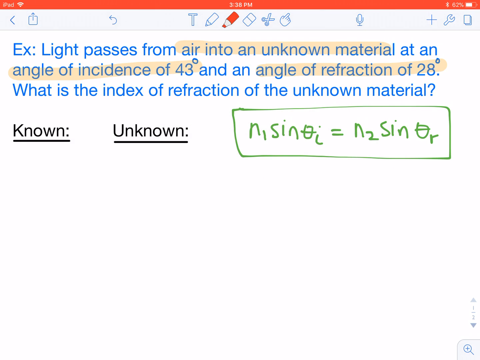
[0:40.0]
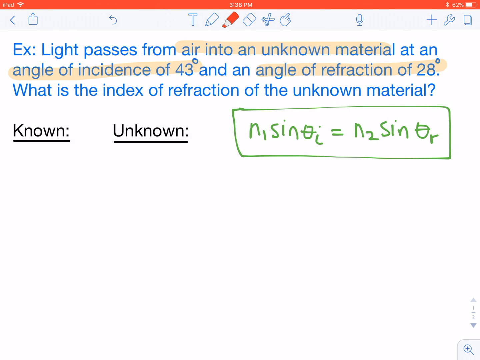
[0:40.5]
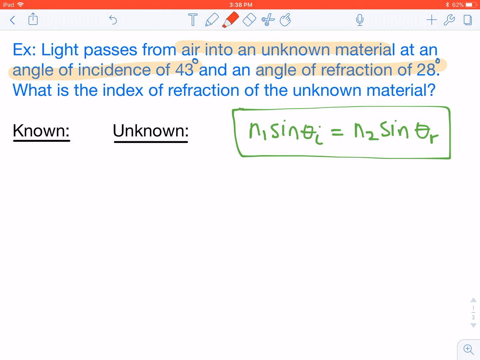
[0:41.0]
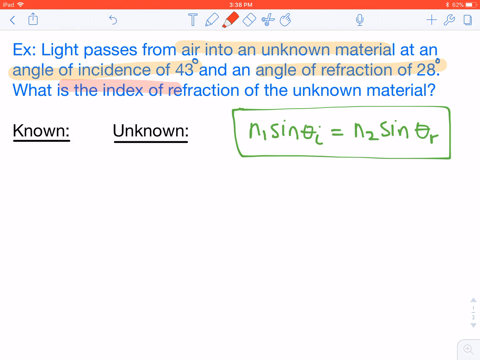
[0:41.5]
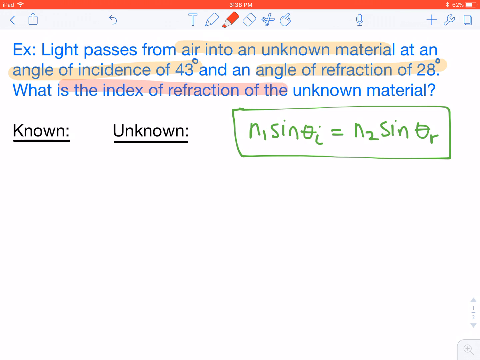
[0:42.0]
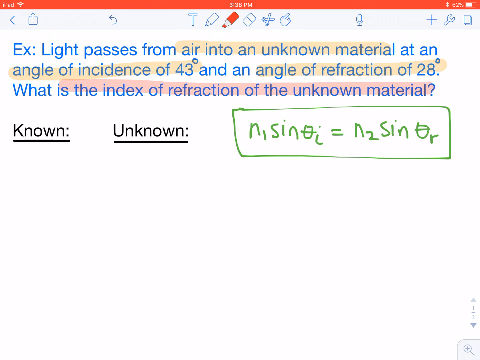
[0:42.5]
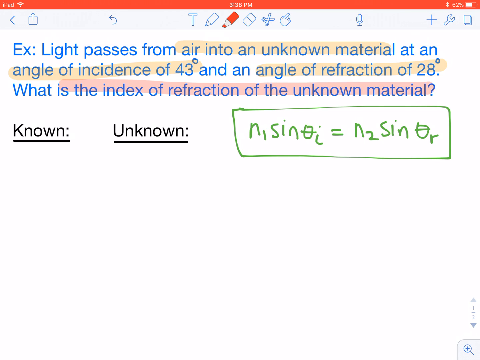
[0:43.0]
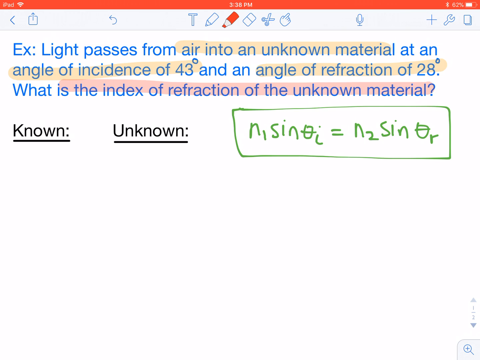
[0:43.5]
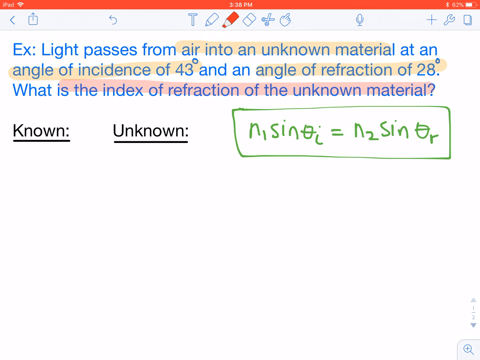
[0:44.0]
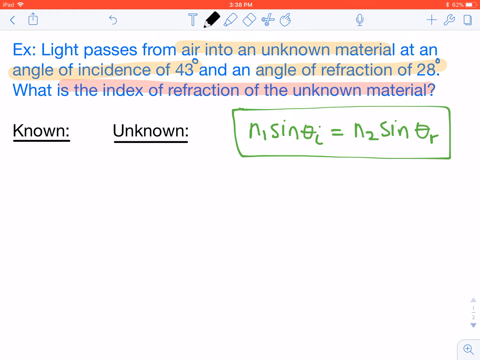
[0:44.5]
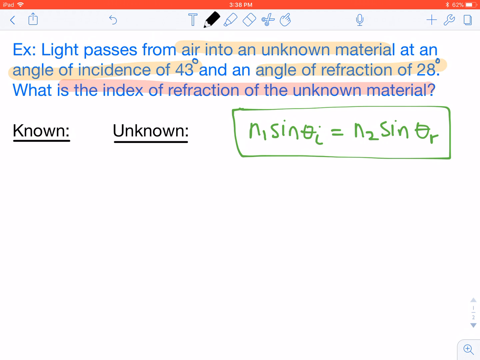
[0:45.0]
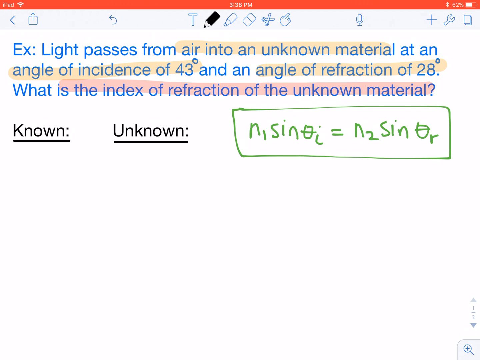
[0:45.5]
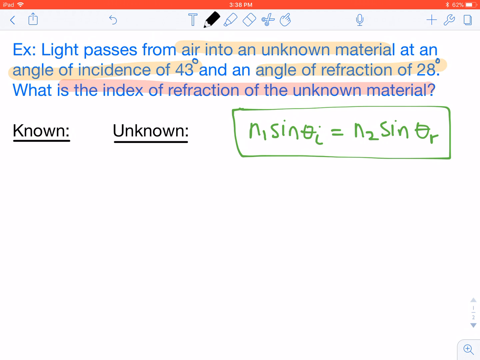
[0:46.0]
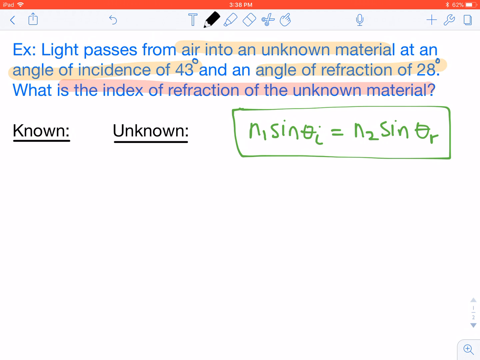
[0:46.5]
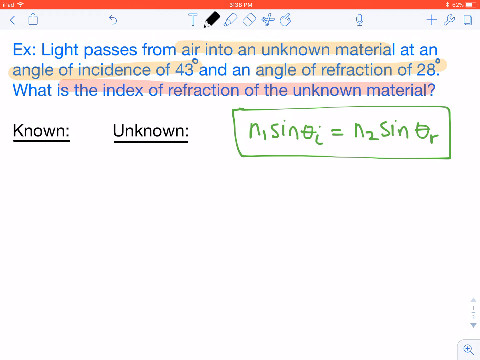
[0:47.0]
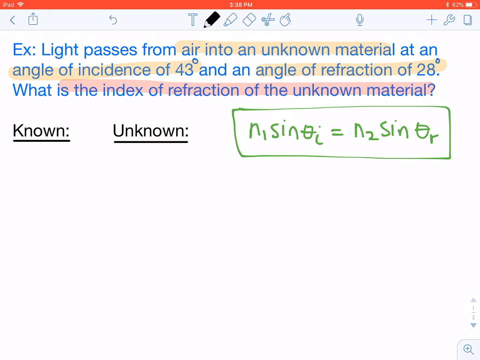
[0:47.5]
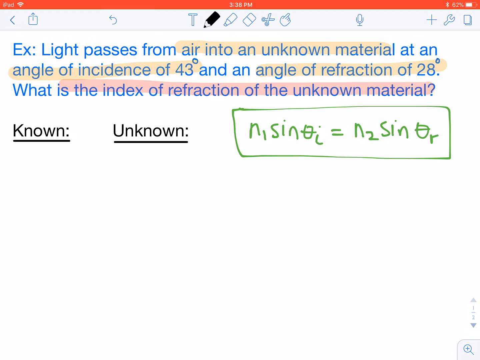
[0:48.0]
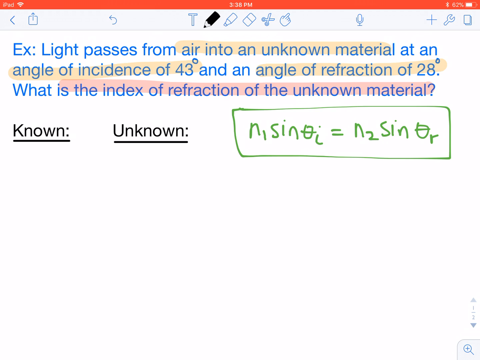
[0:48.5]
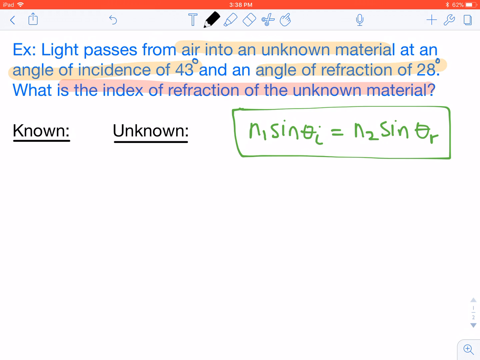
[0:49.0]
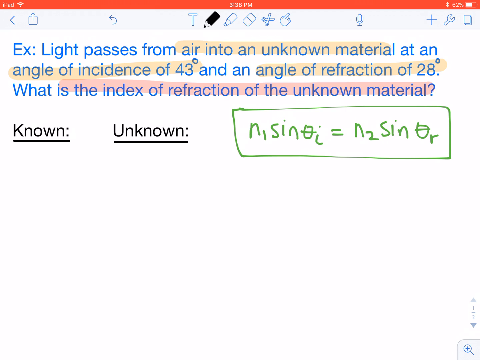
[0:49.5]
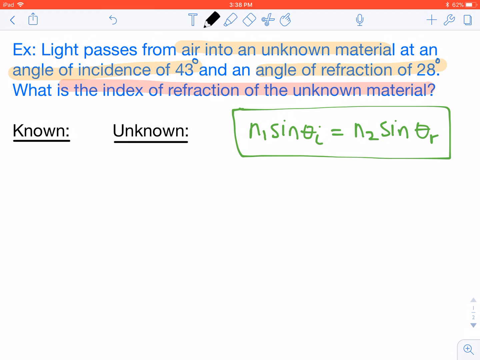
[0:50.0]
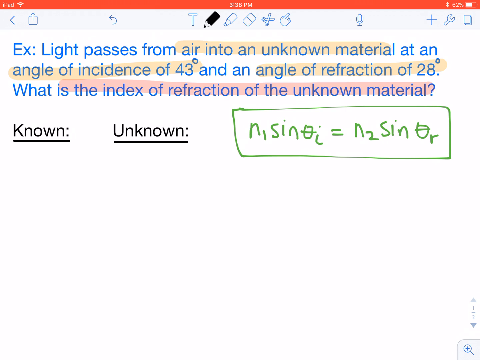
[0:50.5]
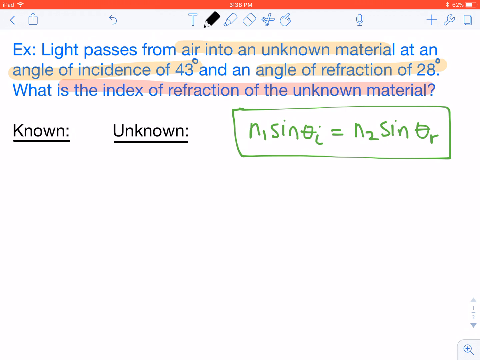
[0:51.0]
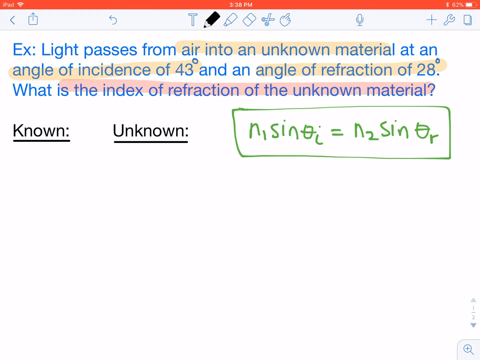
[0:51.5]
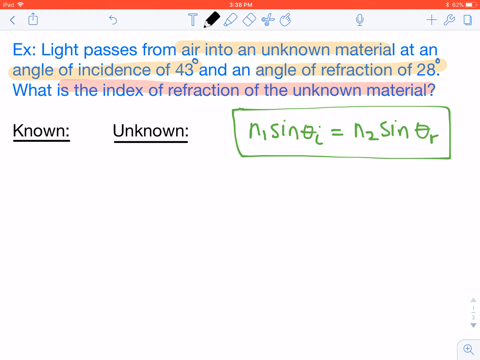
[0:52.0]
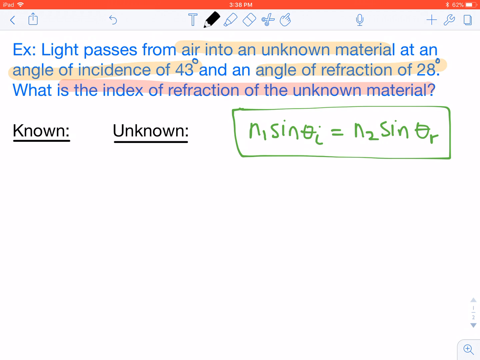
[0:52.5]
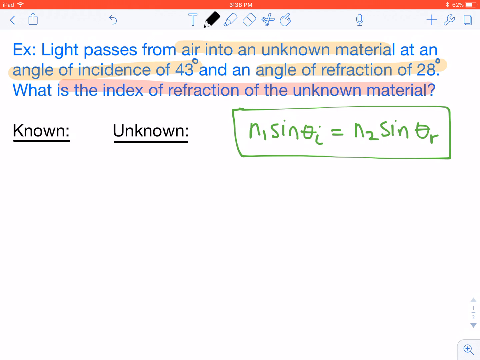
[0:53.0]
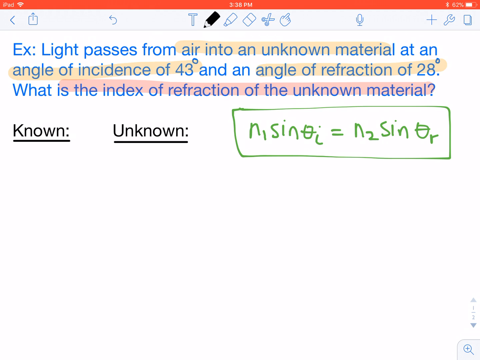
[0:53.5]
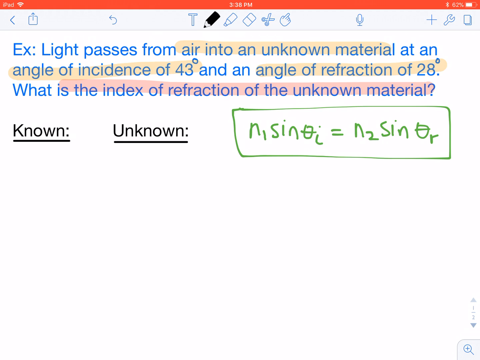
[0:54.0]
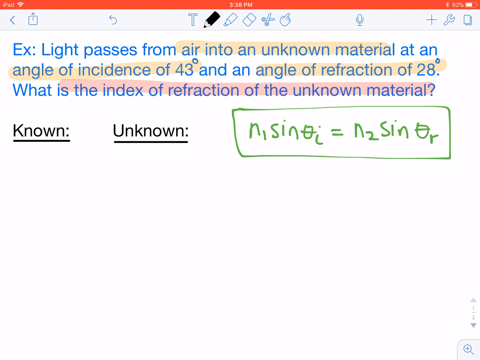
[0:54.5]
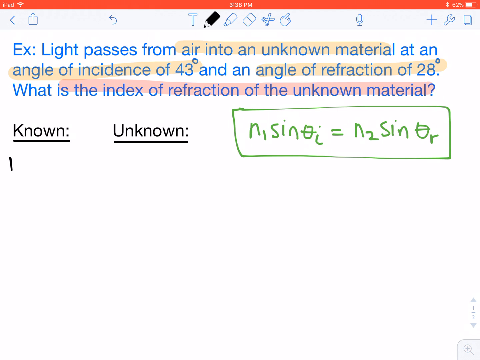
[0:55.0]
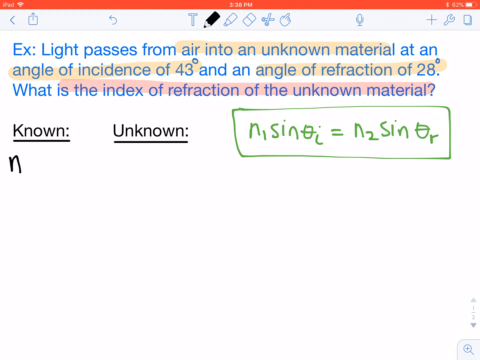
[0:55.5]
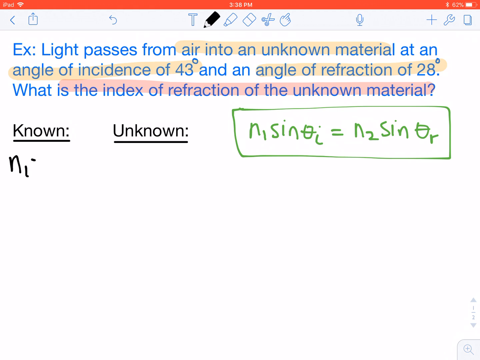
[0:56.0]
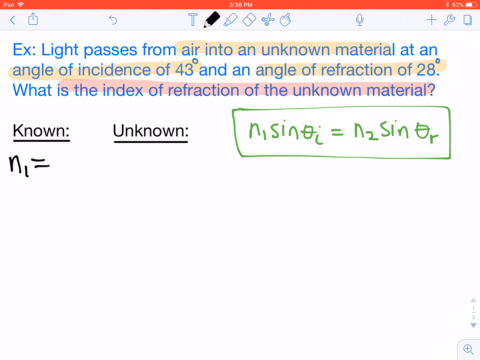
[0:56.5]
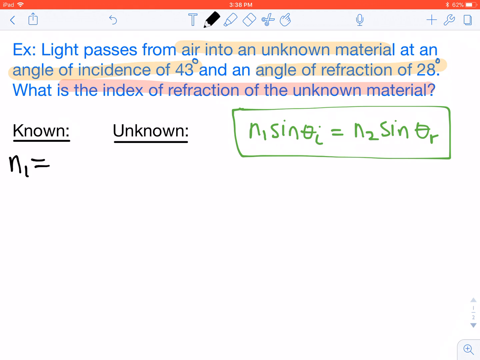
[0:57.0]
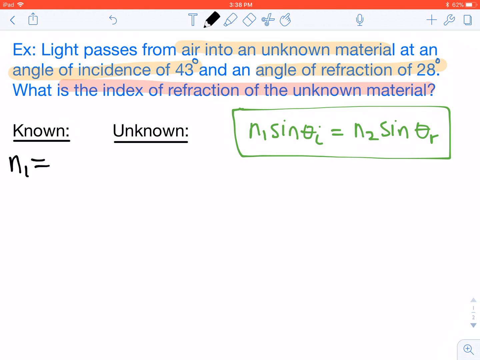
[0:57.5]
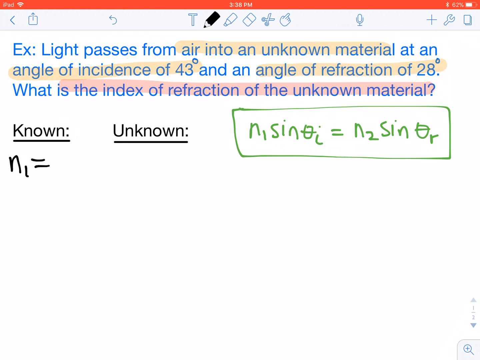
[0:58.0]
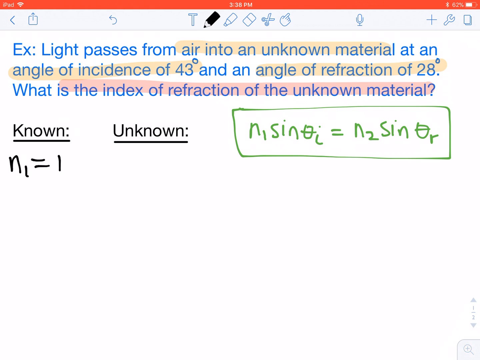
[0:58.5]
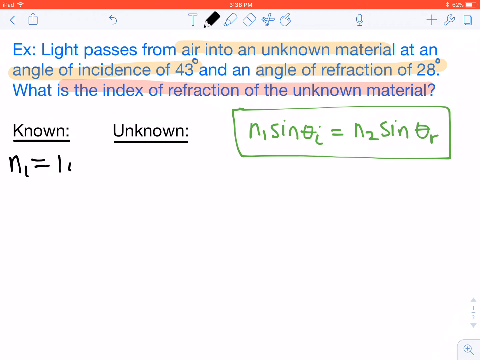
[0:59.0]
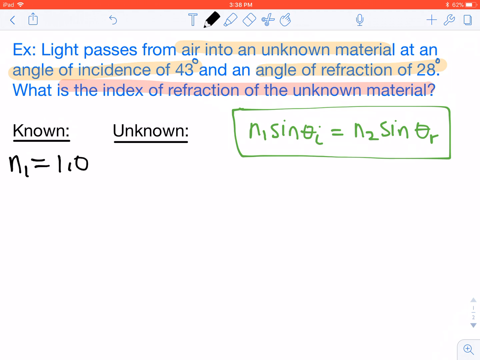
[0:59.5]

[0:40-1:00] The person has switched to a red highlighter and highlights more of the question in red, this time the last sentence: "what is the index of refraction of the unknown material?" They then switch back to black and begin writing on the canvas itself, starting in the known column with something that reads as either "N1L" or "1IO". They are probably done highlighting and seem to be taking letters, symbols and numbers from the equation above and putting them into the known or unknown section.